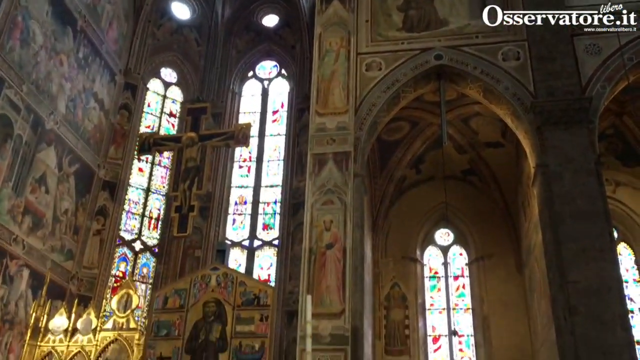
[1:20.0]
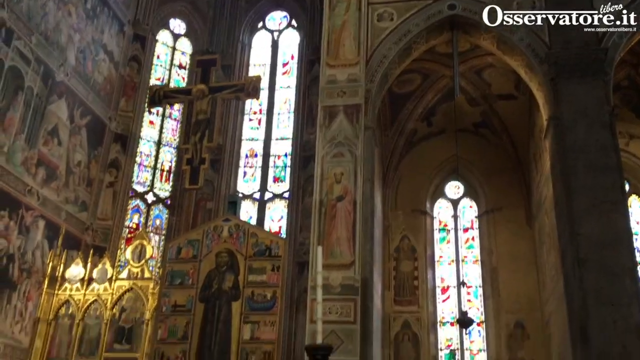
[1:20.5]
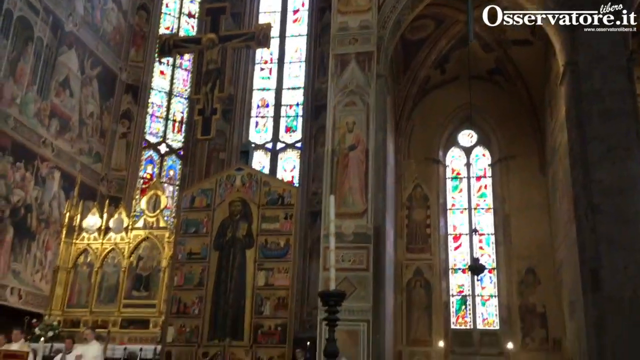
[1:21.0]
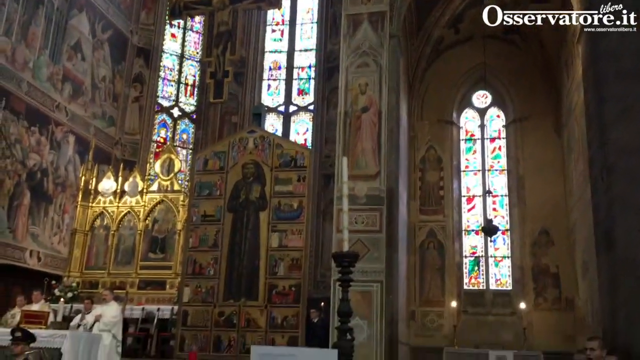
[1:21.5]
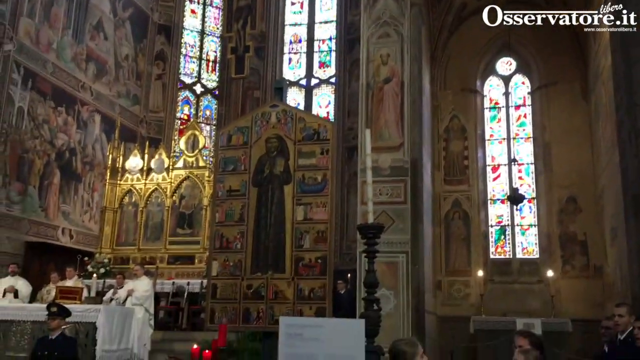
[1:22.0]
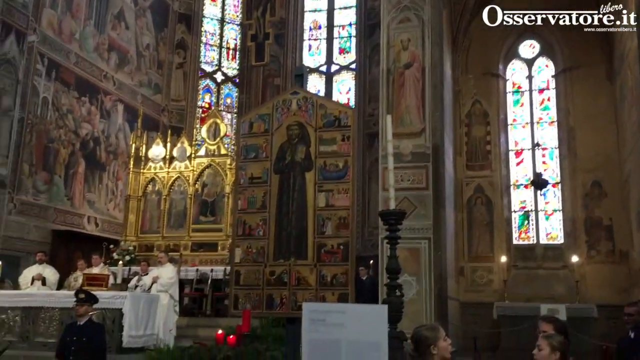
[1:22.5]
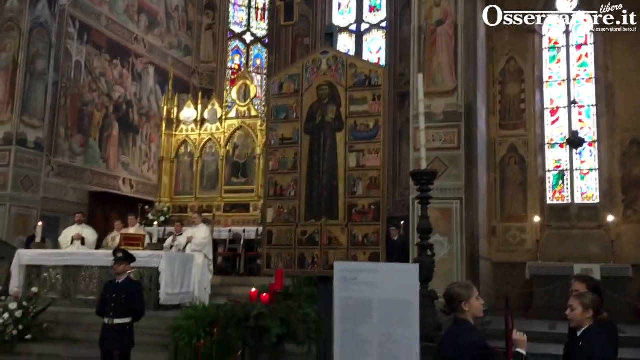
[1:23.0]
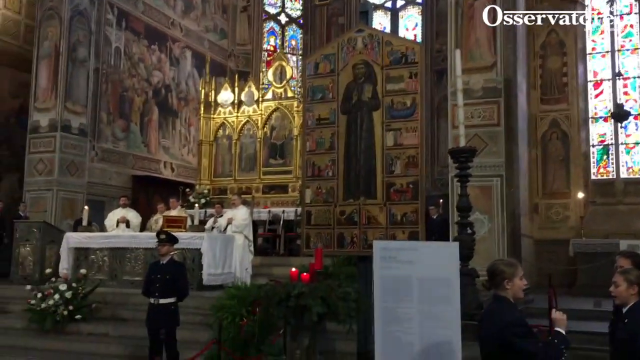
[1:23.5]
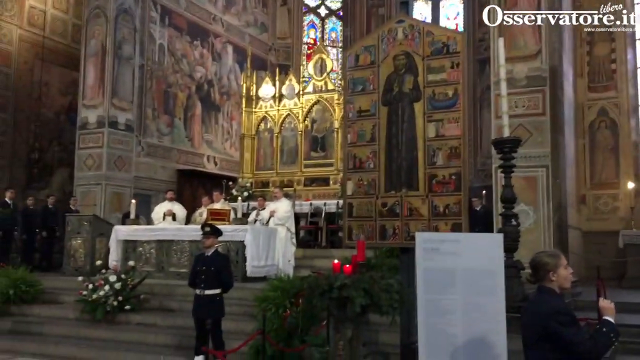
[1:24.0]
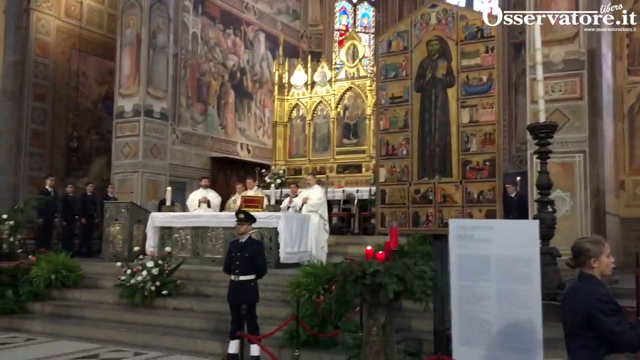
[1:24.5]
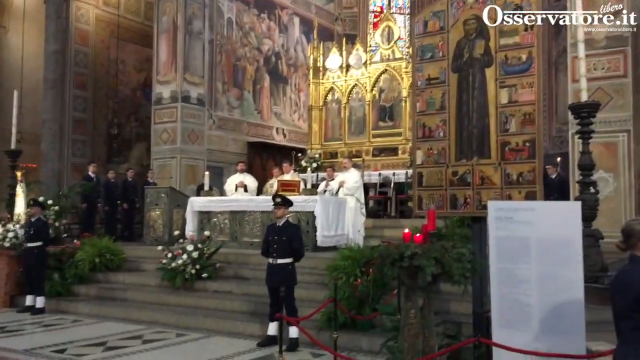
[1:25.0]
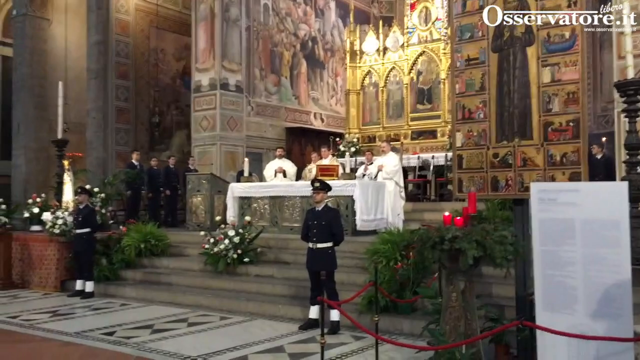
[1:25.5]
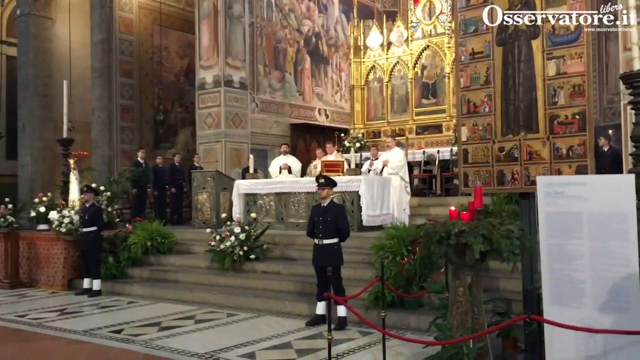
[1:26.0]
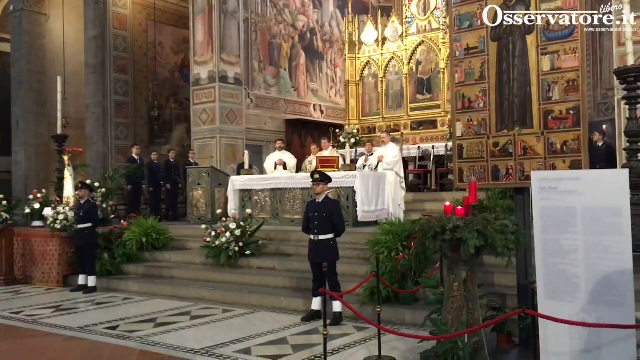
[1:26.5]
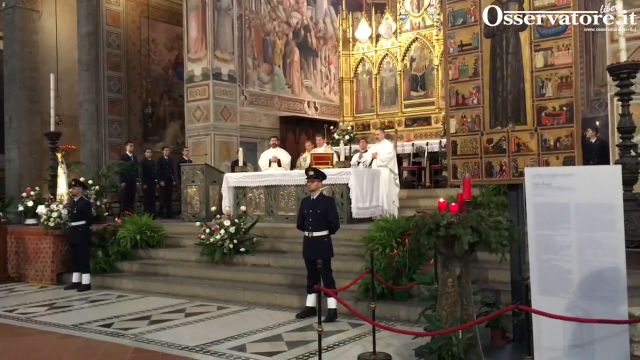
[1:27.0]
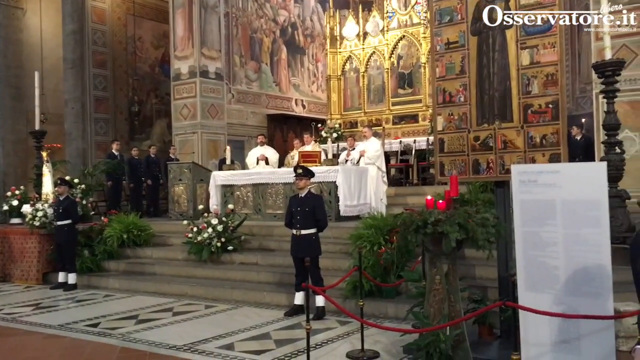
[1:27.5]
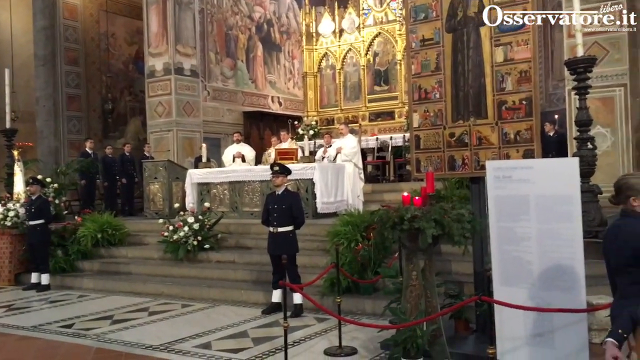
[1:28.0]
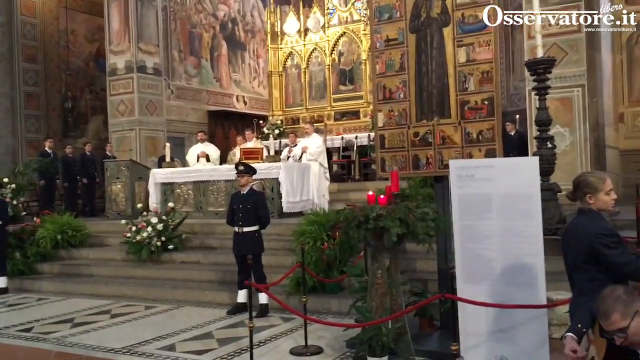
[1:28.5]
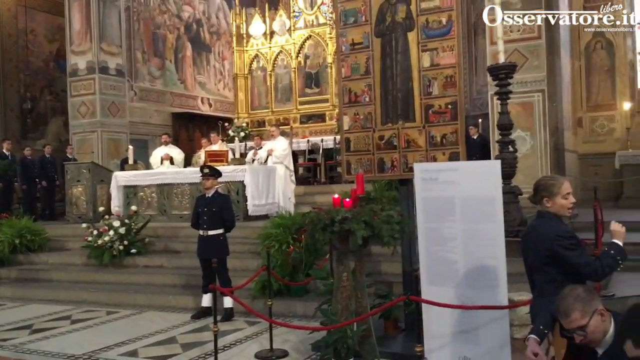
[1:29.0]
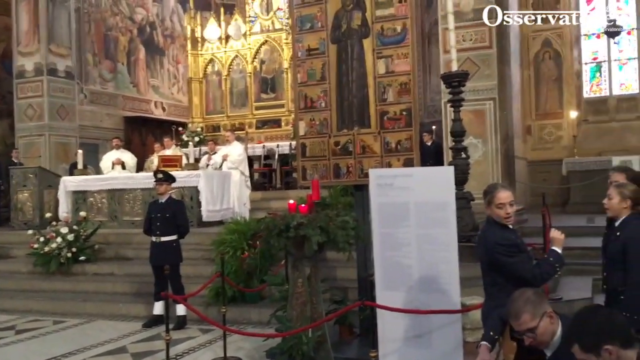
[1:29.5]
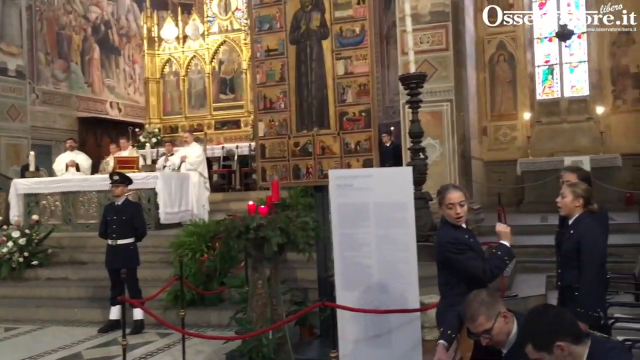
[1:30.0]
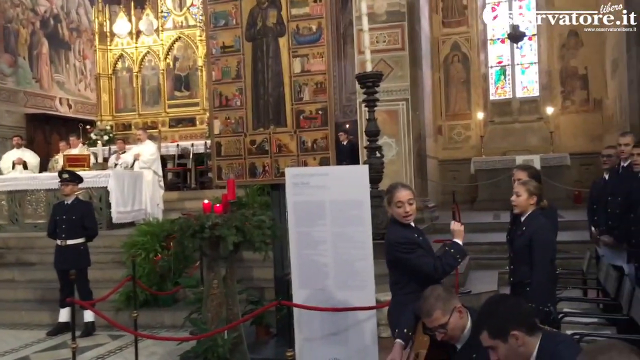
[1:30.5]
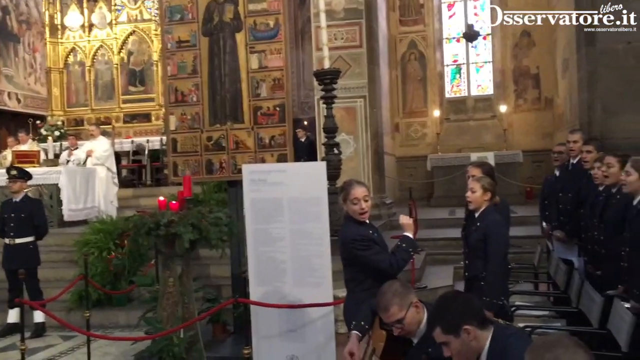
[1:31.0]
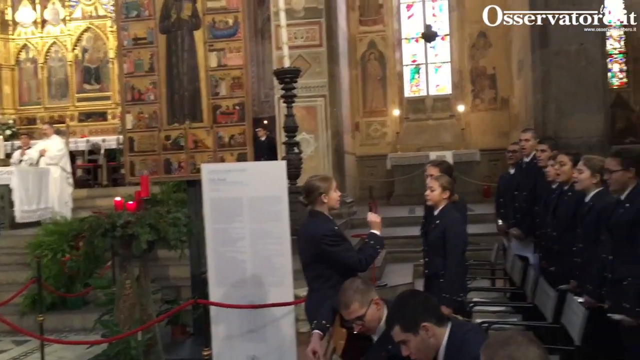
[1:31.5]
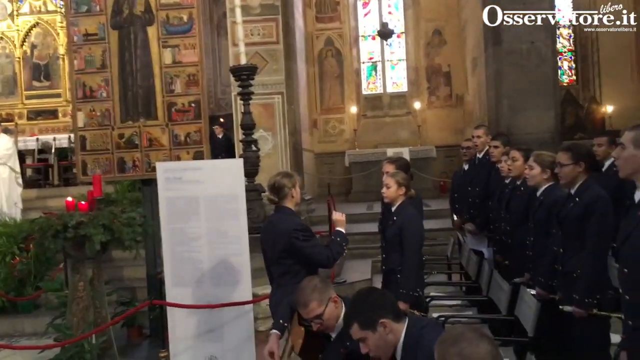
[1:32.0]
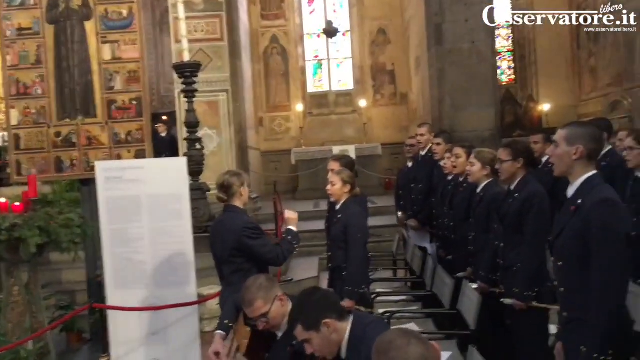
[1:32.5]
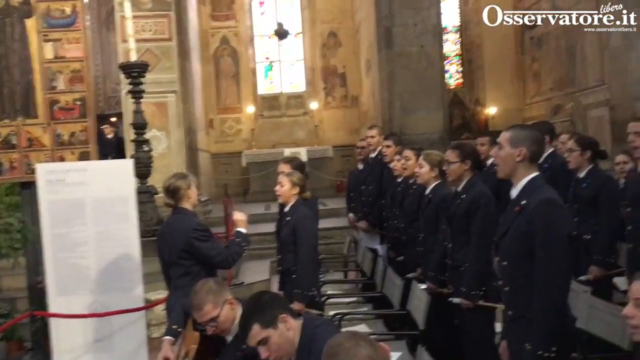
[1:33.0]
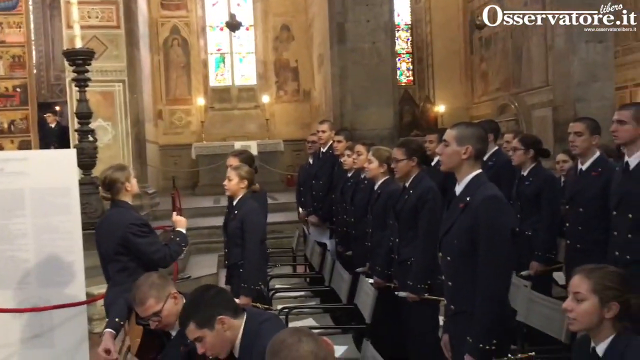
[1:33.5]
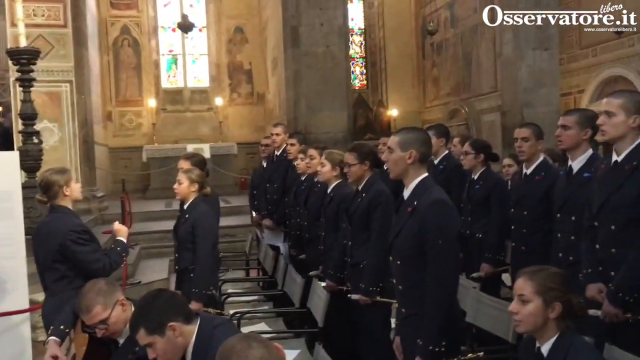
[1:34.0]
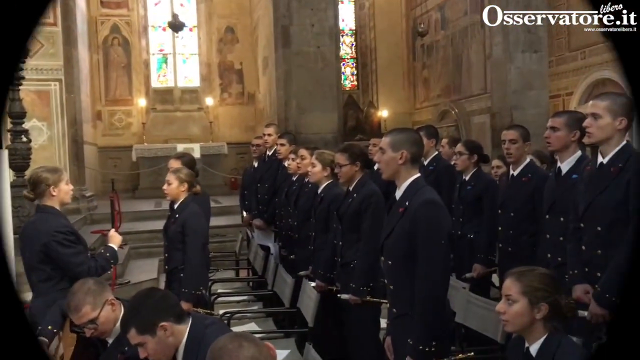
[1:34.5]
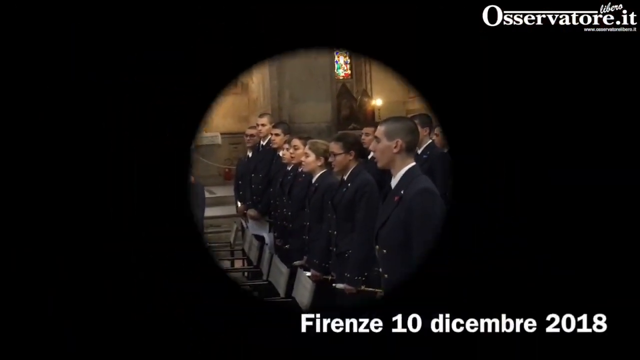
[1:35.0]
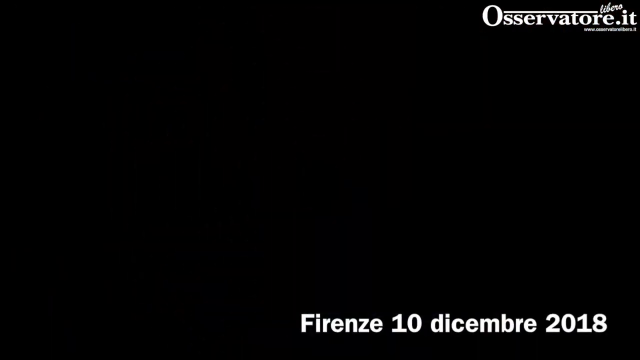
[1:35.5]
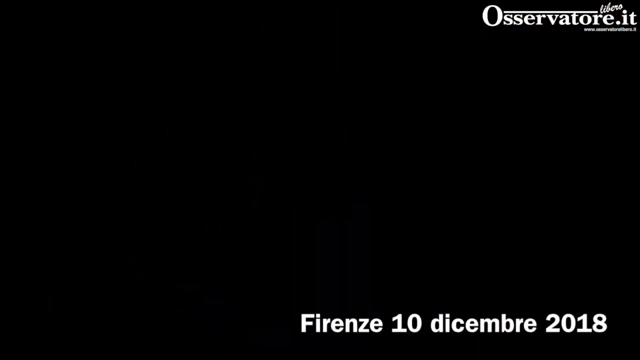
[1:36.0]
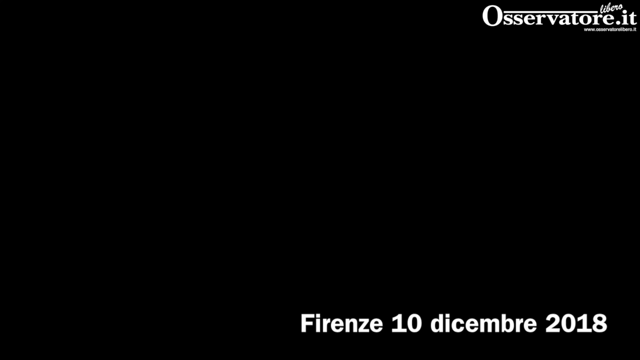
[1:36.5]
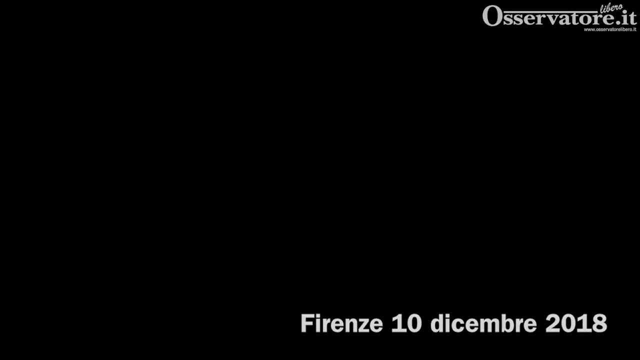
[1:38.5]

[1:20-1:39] More views of the stage and the altar appear, with what looks to be a military person with a hat in front, and a red piping drape. The choir director leads the guitarists and is still leading the singers. Two military professionals are then visible. The video mixes shots of the altar and the atmosphere, then zooms back in on the choir, which is a mixture of male and female performers. It then sort of fades to black and shows a date on the screen in Italian: 10 December 2018.